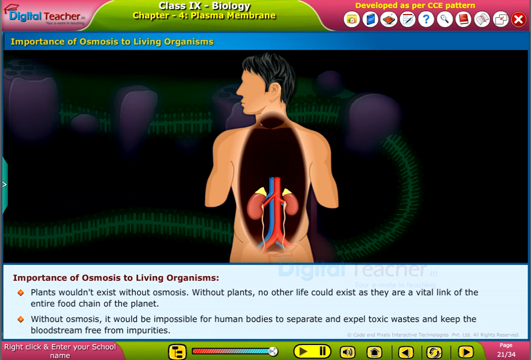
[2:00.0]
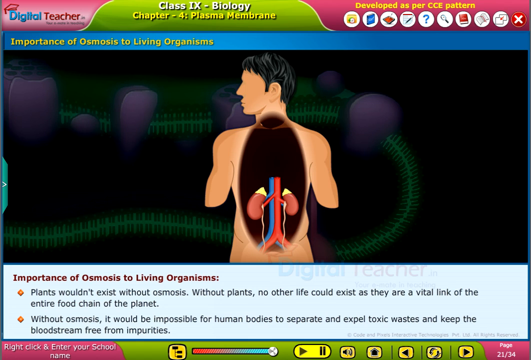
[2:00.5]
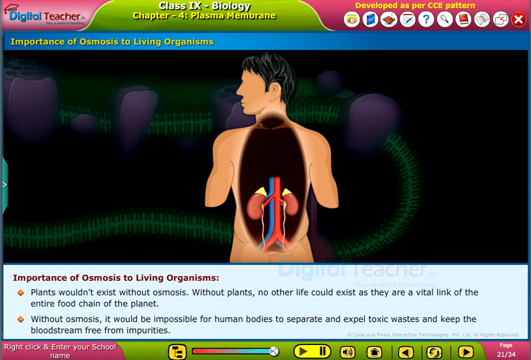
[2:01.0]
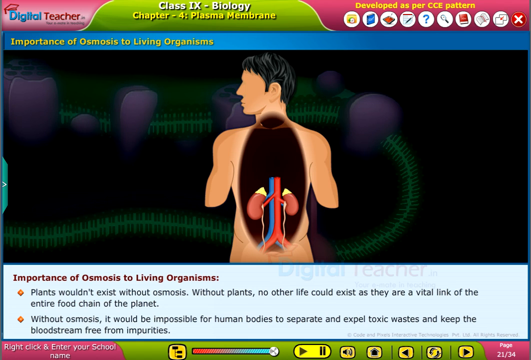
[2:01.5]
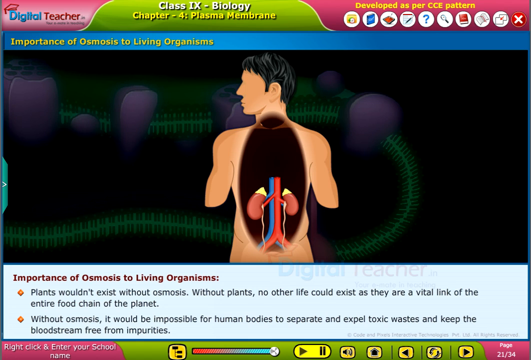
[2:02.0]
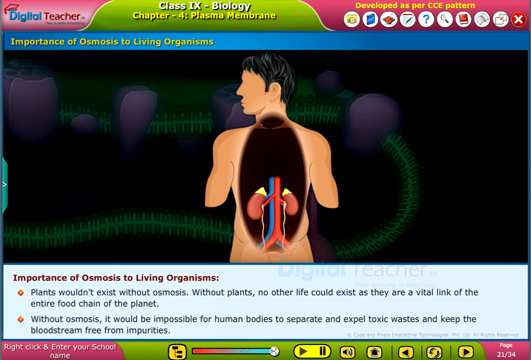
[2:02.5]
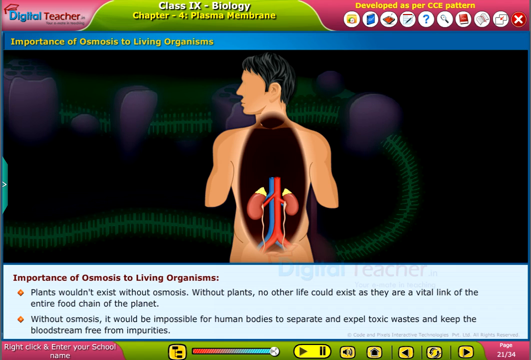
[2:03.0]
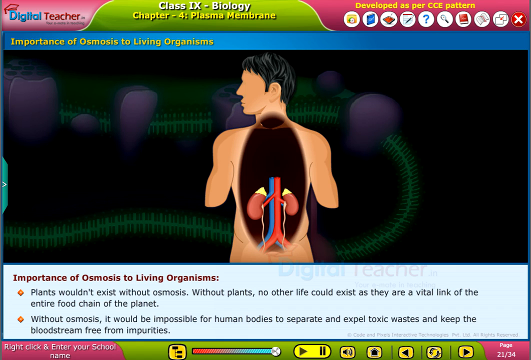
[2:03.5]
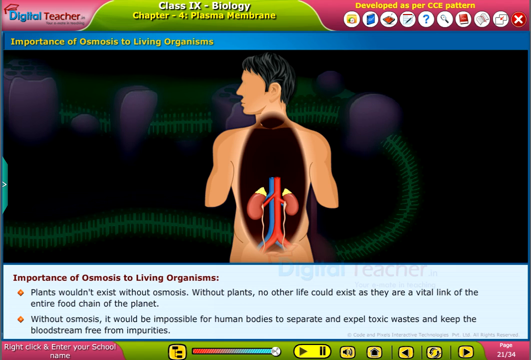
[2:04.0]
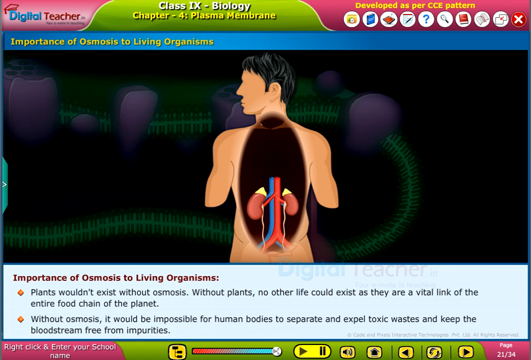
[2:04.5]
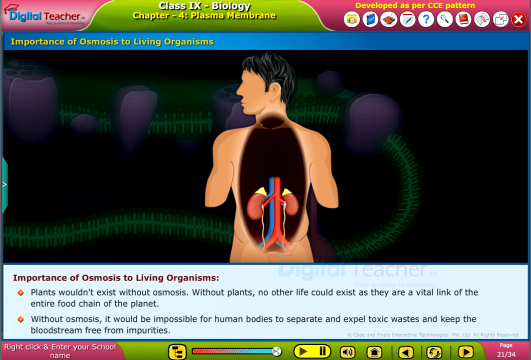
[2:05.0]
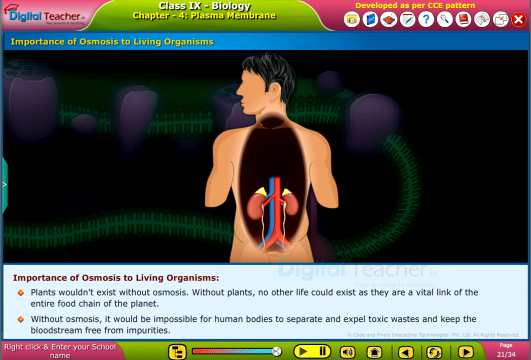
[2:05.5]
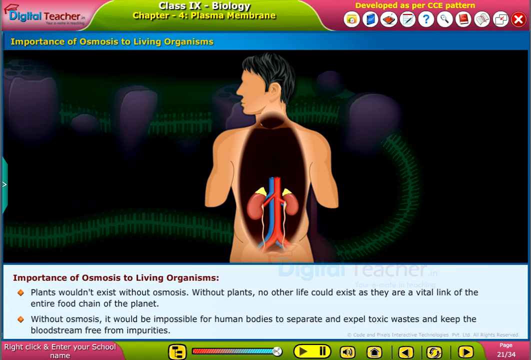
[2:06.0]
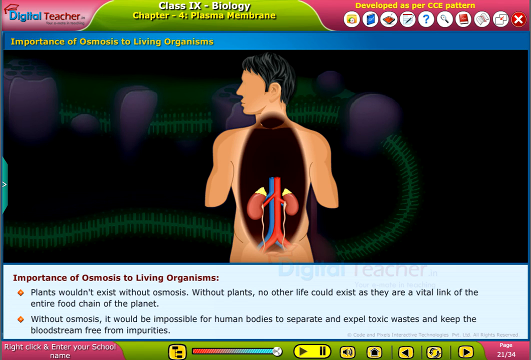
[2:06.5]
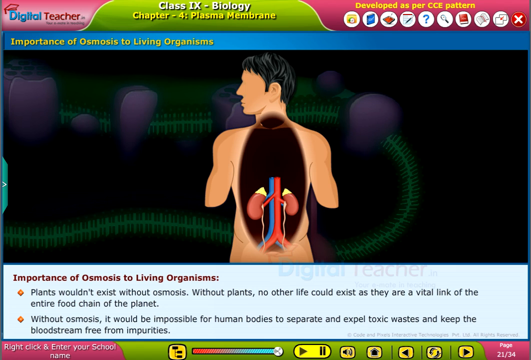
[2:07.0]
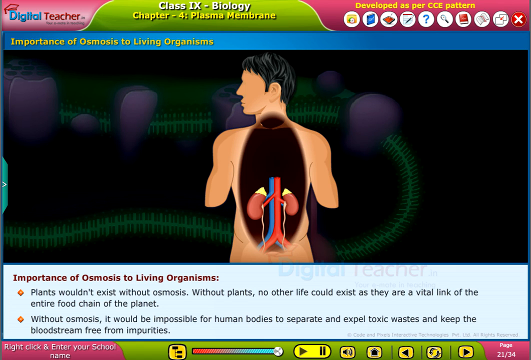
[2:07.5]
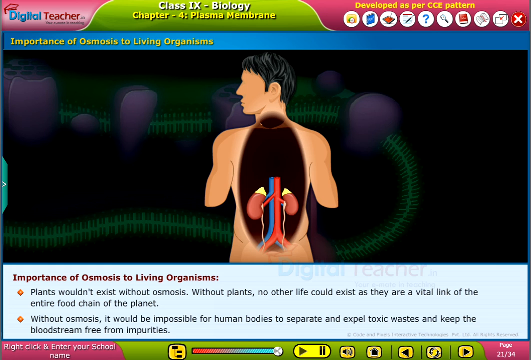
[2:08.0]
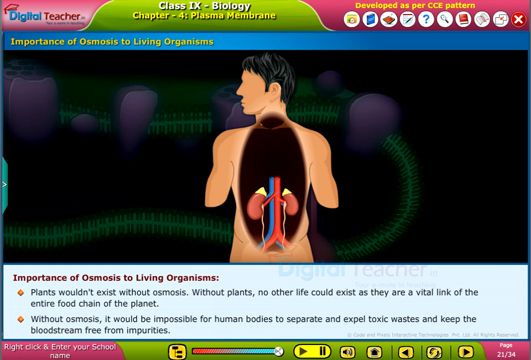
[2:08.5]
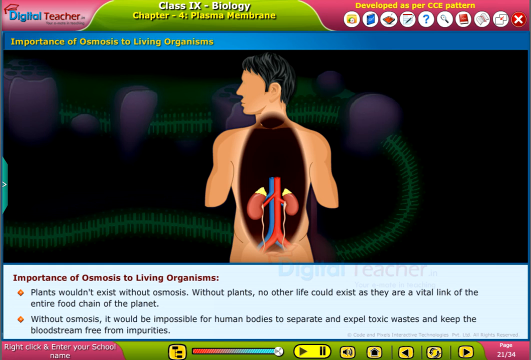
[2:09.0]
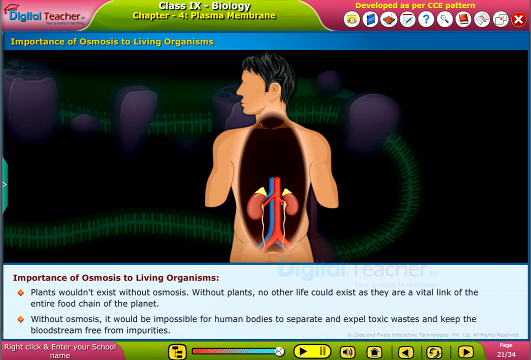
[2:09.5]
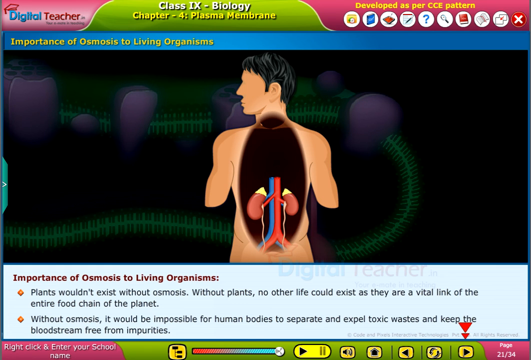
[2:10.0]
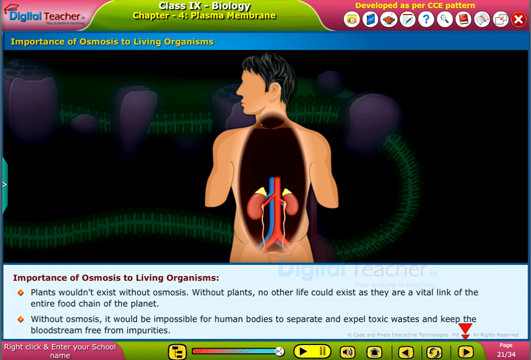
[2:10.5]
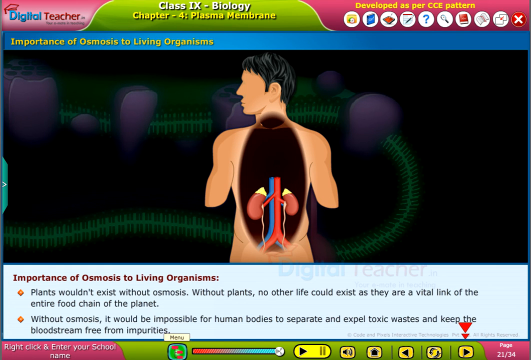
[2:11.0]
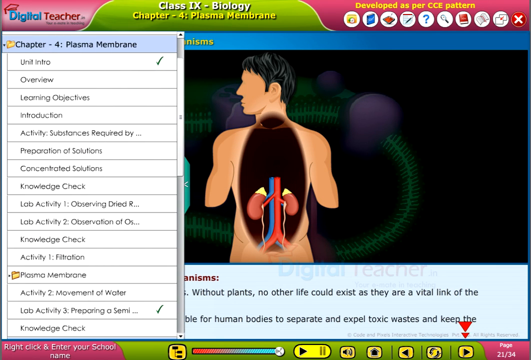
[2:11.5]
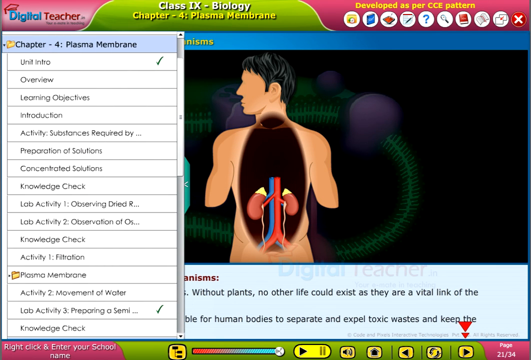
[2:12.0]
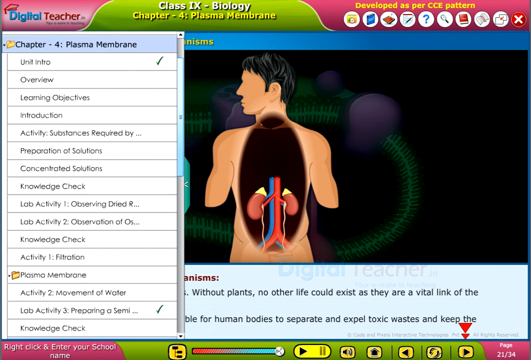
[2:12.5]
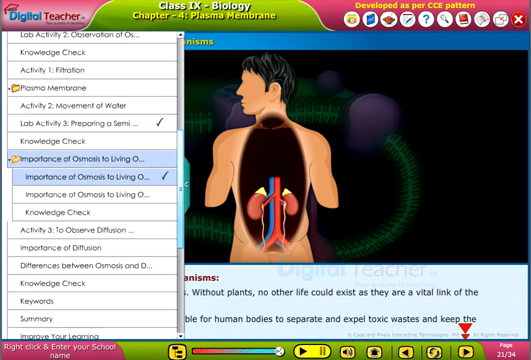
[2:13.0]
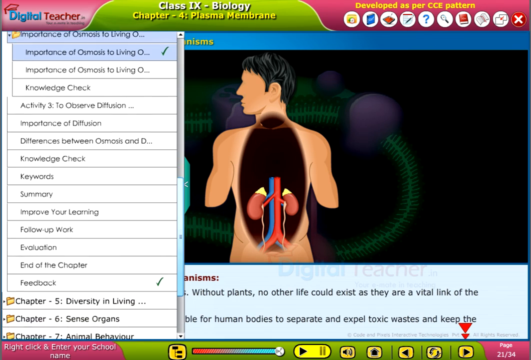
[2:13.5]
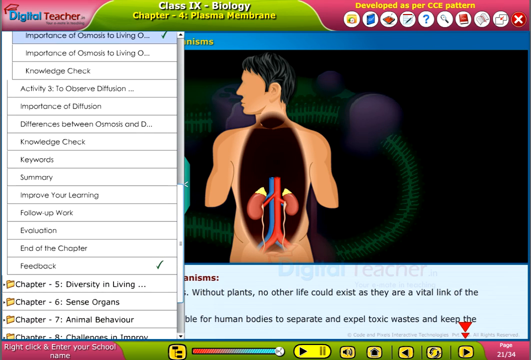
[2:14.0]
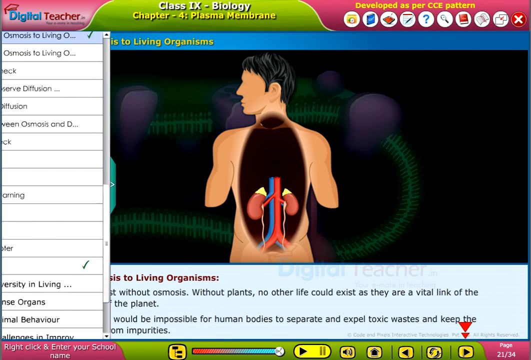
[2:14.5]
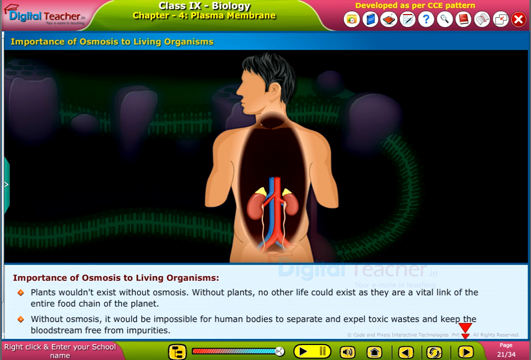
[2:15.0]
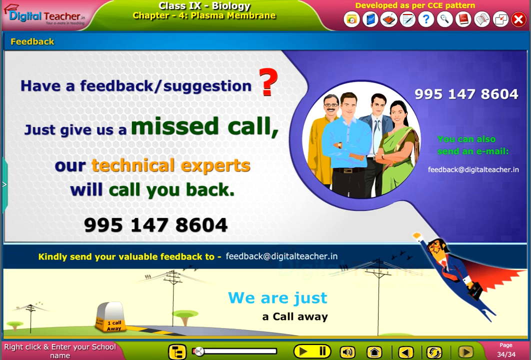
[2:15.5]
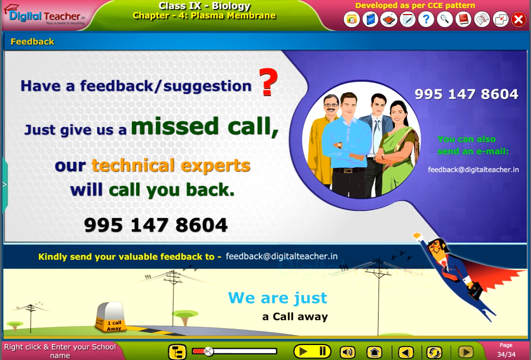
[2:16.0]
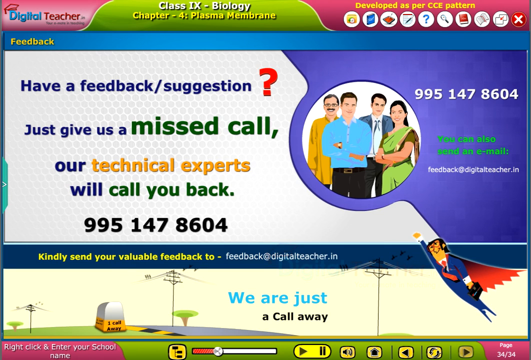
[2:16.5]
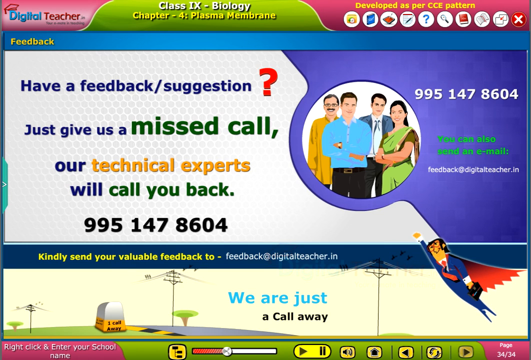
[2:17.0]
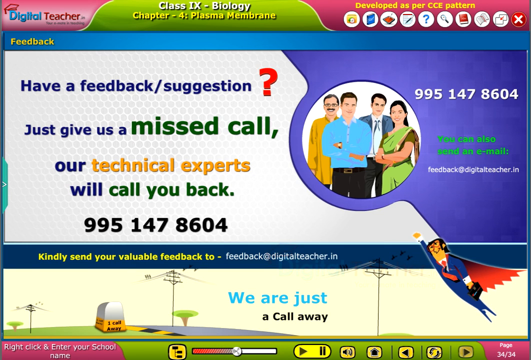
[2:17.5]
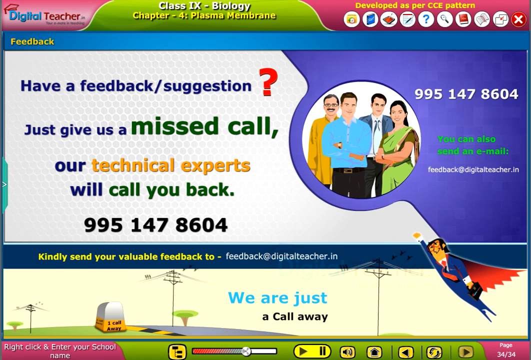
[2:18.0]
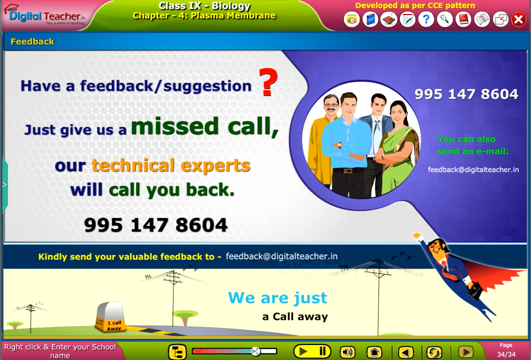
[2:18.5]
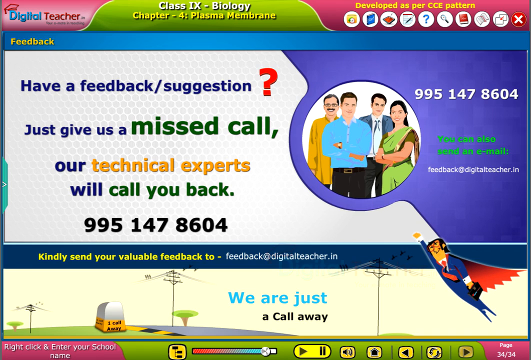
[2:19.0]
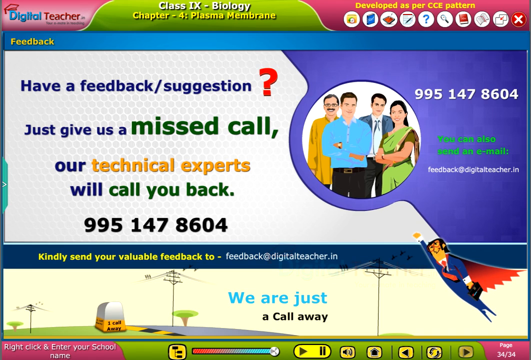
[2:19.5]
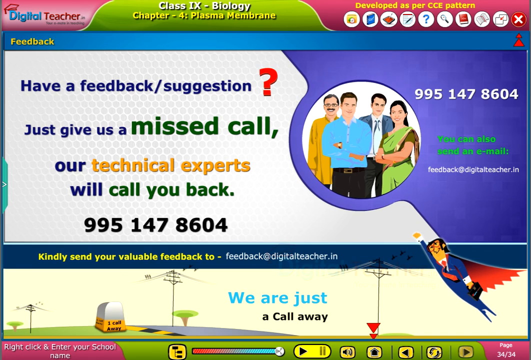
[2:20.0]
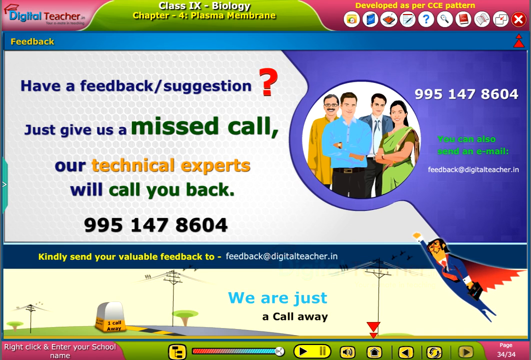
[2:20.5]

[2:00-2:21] The screen reads Class IX, Biology, Chapter 4, Plasma Membrane, and shows a human with an opening revealing the organs needed to process osmosis. The background appears to be a green chain with purple sections. An outline of the chapter lists unit intro, overview, learning objective, introduction, activity, preparation of solution, concentrated solutions, knowledge check, lab activity 1, lab activity 2, knowledge check, activity filtration, plasma membrane, activity 2, movement of the water, activity 3, preparing, and finally knowledge check. A loading biology page appears, followed by a feedback page with text ending "our technical experts will call you back", showing people of multiple races in the background along with a number and an email.